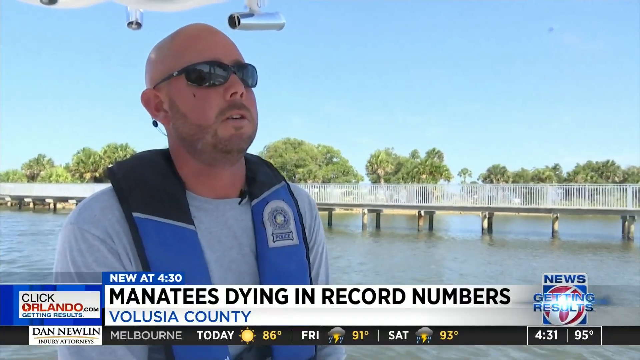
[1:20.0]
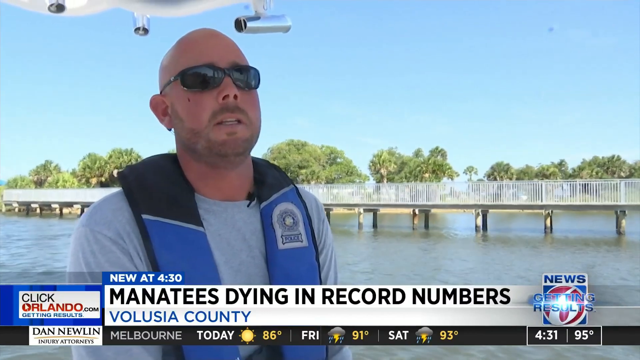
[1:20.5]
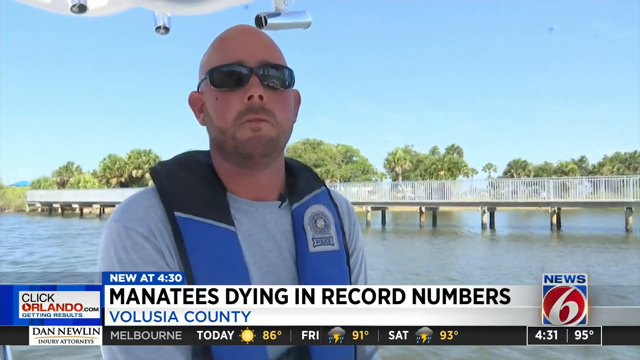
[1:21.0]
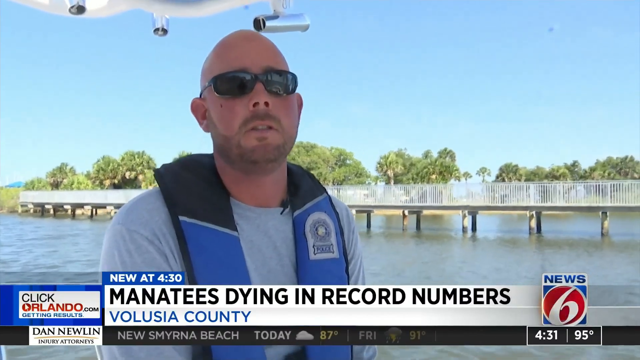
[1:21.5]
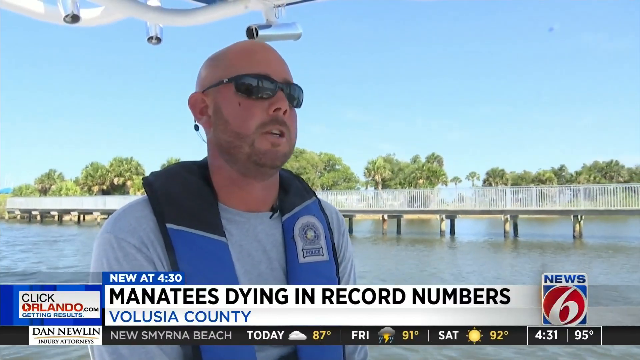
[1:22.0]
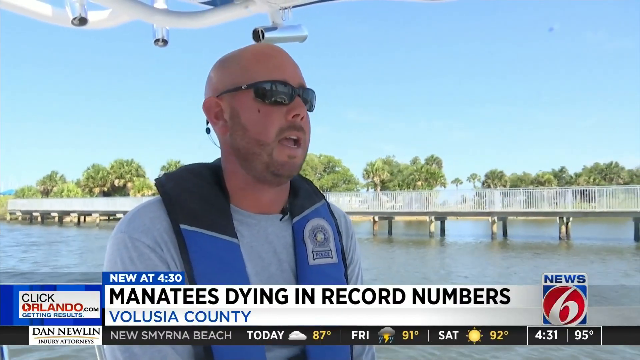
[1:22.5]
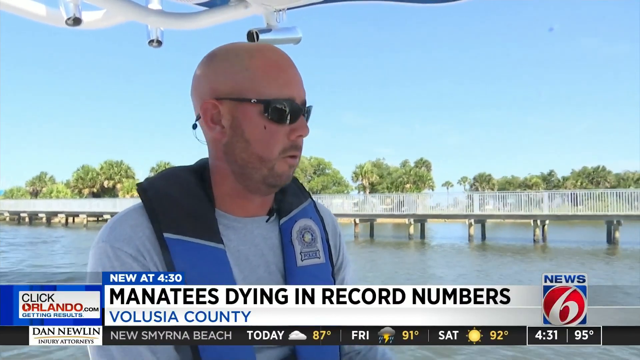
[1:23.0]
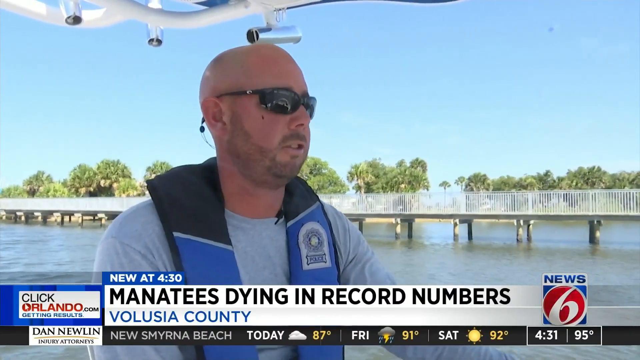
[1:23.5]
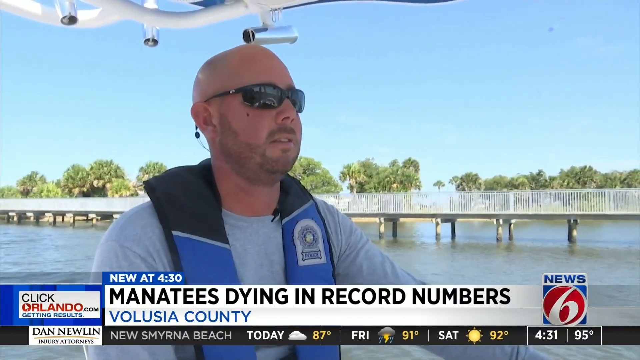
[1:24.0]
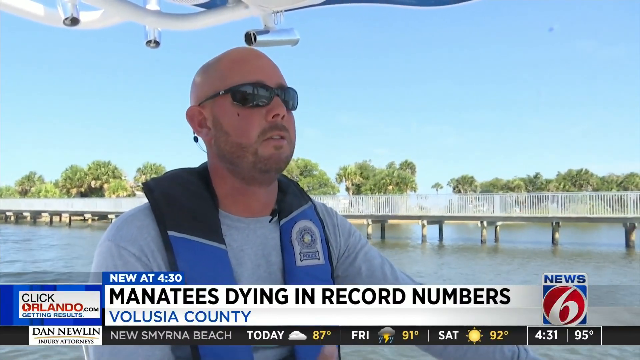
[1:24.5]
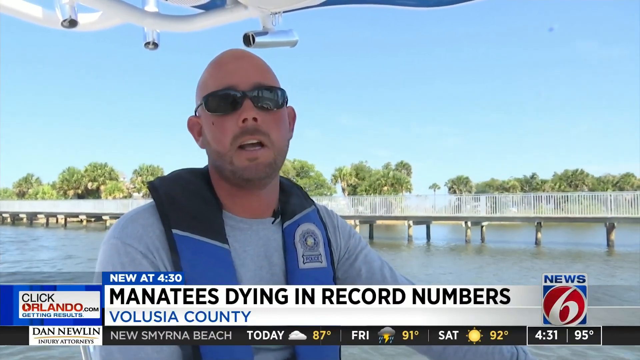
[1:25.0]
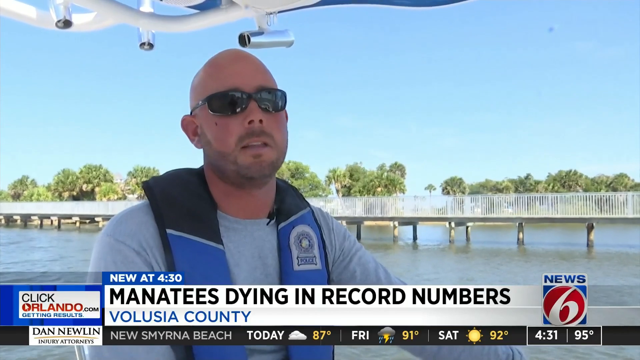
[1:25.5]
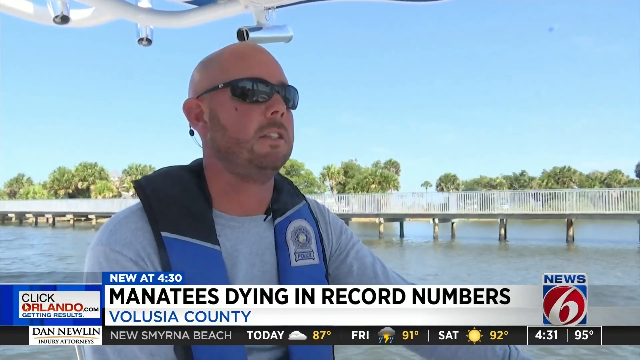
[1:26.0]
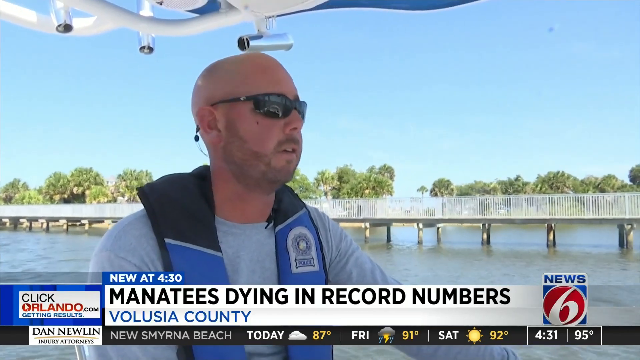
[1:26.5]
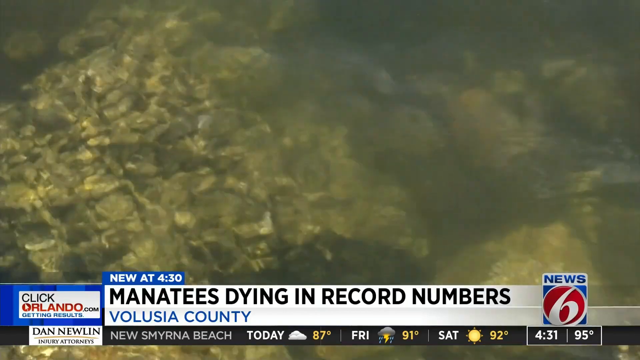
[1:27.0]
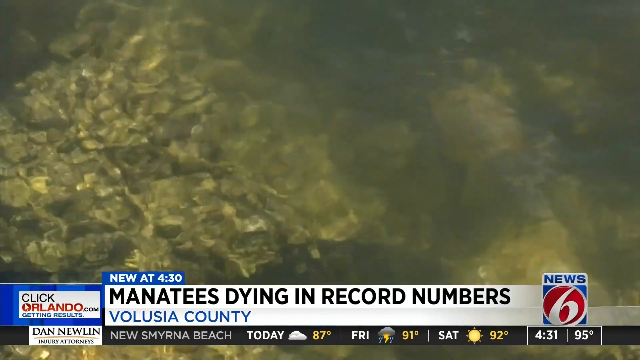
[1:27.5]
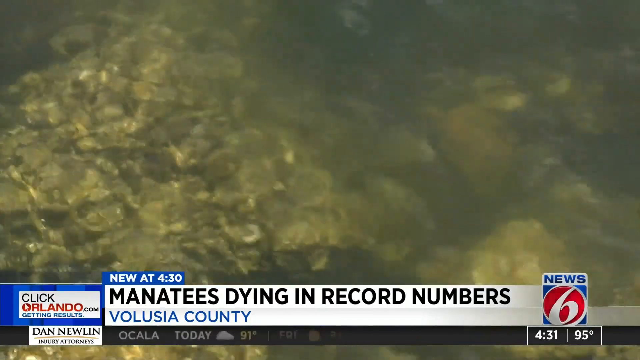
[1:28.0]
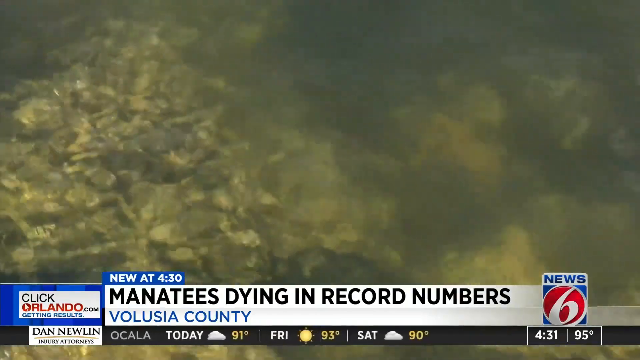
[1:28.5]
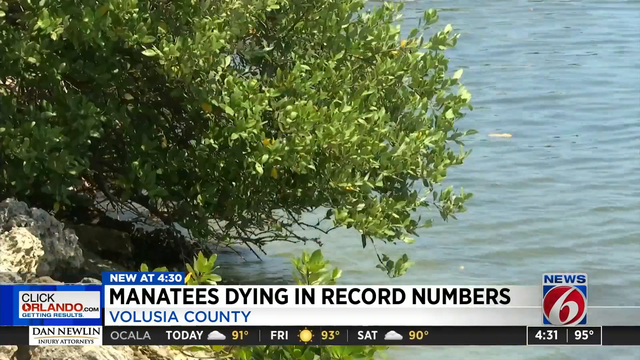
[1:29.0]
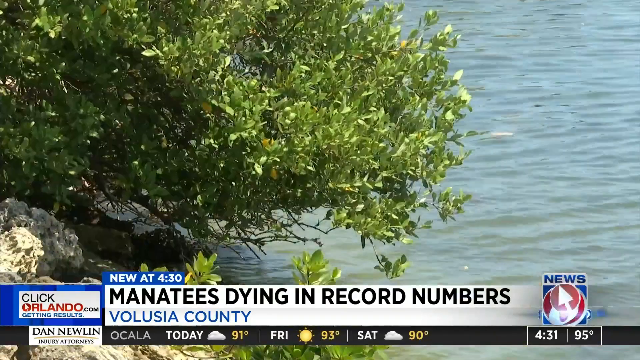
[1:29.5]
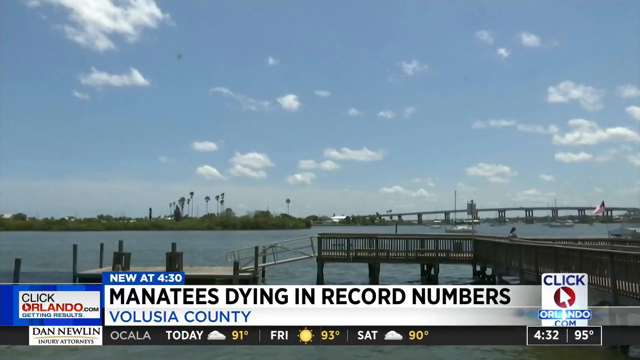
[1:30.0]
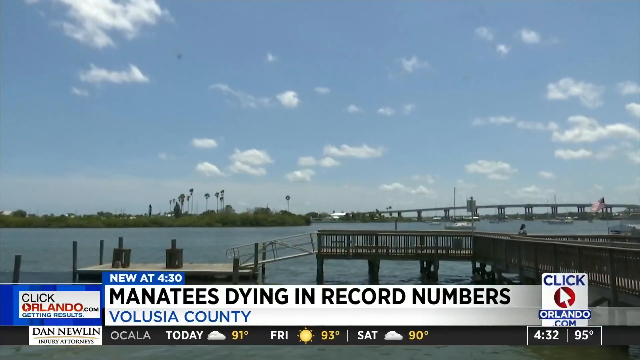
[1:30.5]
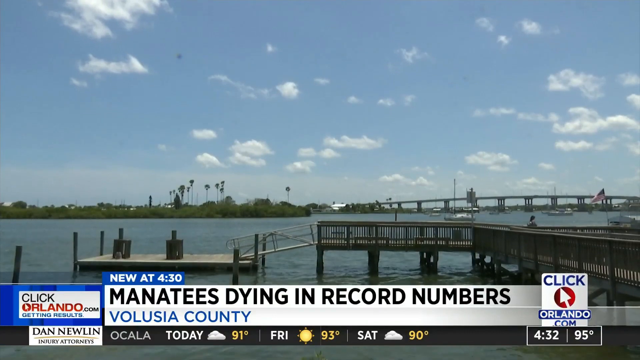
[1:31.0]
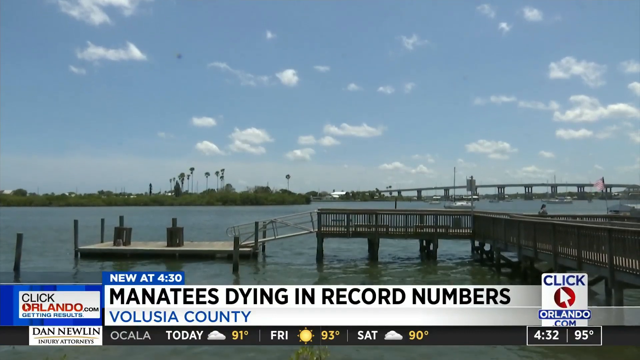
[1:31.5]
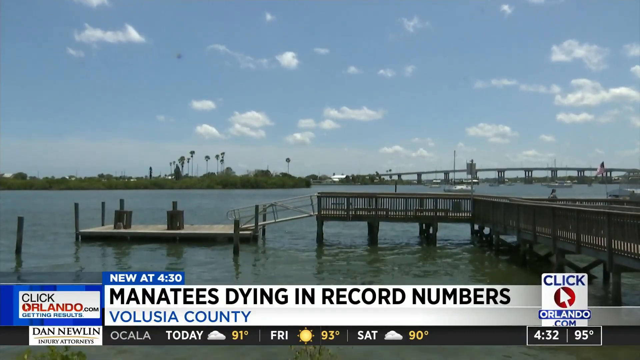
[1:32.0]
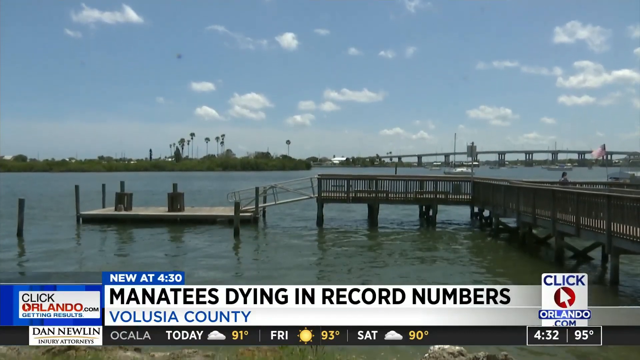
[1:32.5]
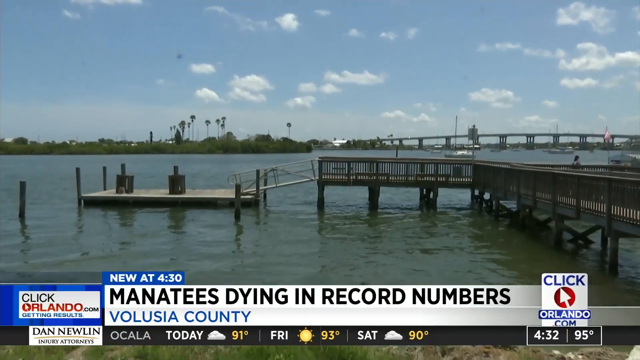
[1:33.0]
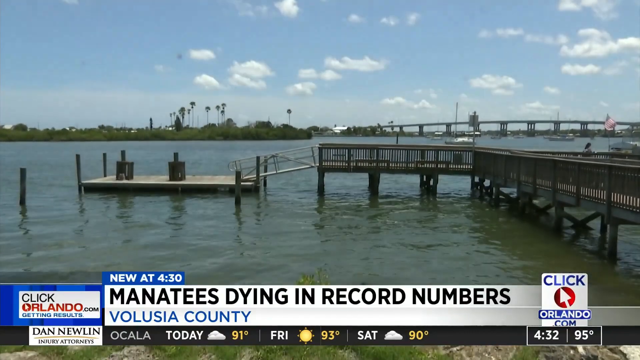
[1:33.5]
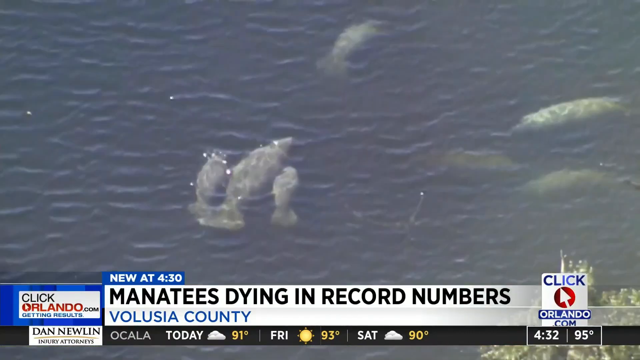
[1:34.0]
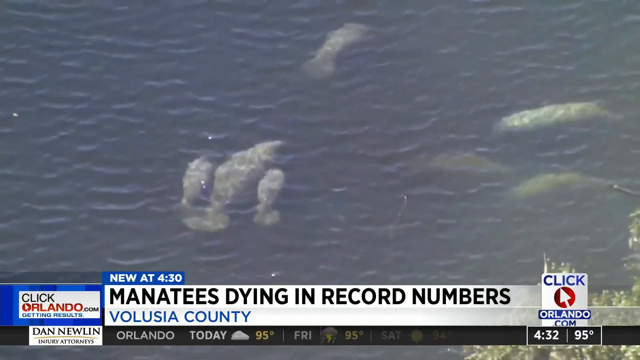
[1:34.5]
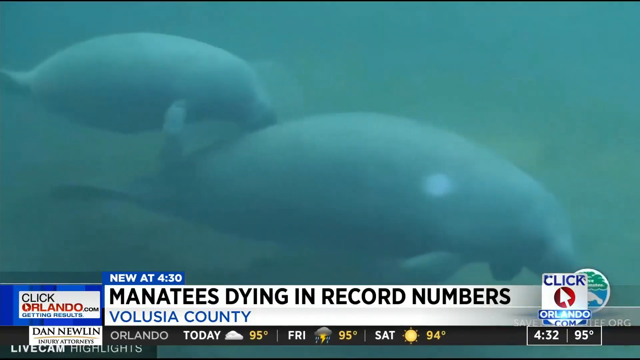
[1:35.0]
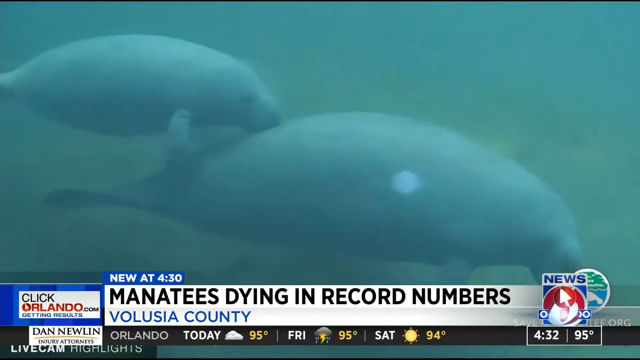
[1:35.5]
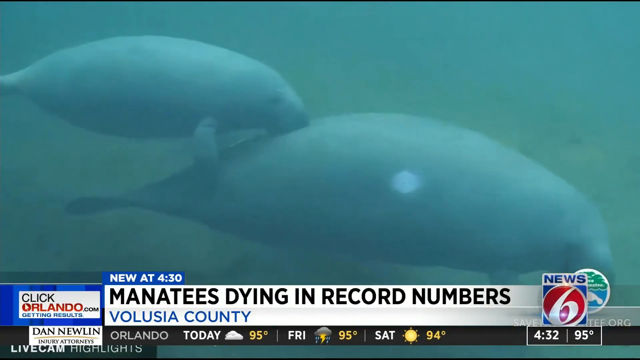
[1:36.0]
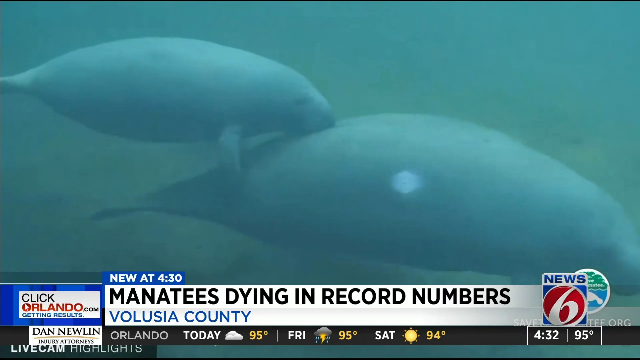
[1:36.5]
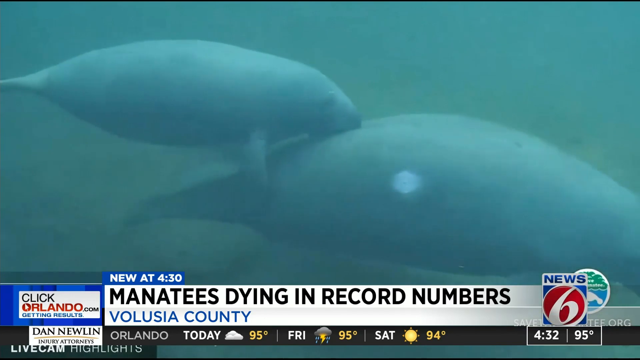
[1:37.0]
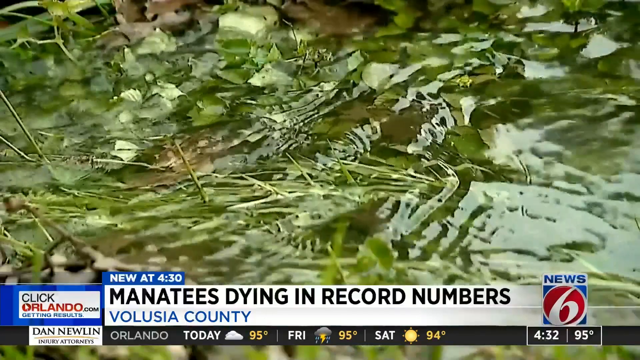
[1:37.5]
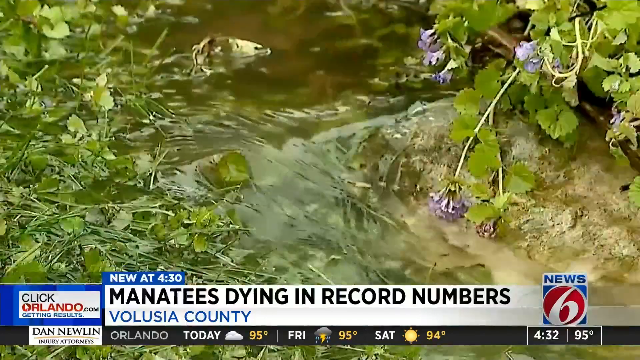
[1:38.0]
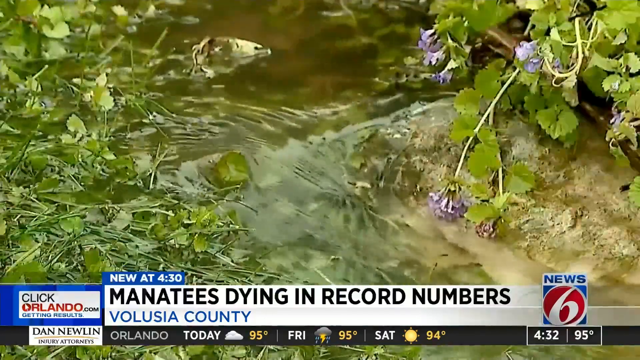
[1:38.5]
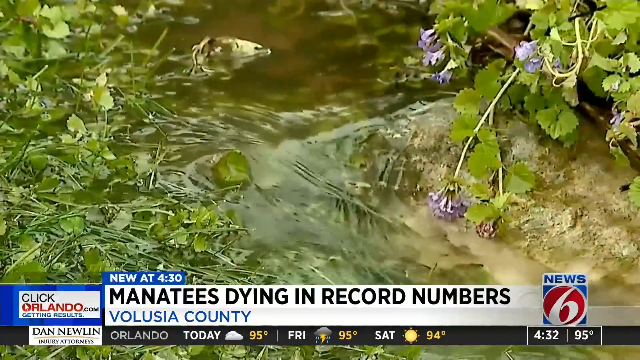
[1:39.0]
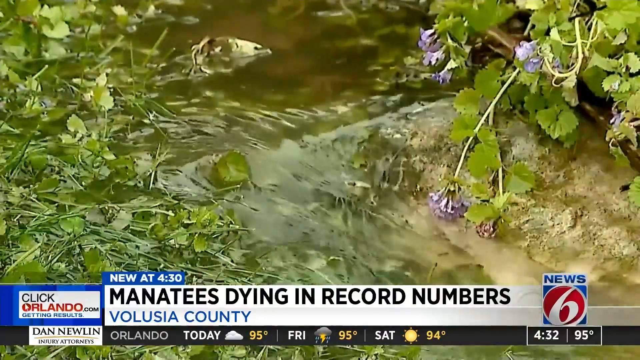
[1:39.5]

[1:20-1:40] The same police officer speaks to the camera on the boat. The graphics at the bottom of the screen are unchanged, mentioning manatees dying in record numbers in Volusia County, with "ClickOrlando.com" on the right side along with 4:32 pm and 95 degrees. A shot shows manatees swimming by, with perhaps green trees, a dock and a pier, and palm trees along the shoreline in the background. An overhead shot, probably from a drone, shows several manatees, including a family. A closer shot shows manatees swimming slowly in the water. A quick shot shows greenery and vegetation along a creek or small river running fairly quickly, before the video returns to the bald, bearded police officer in sunglasses speaking to the camera.